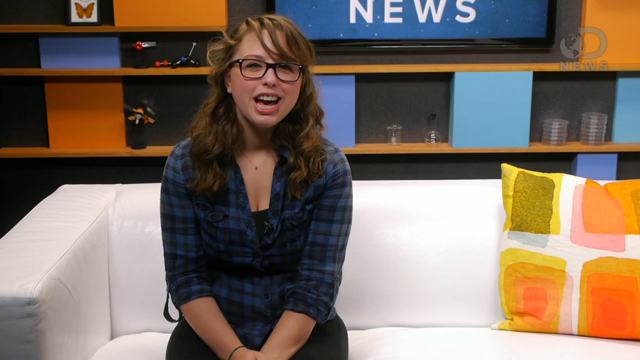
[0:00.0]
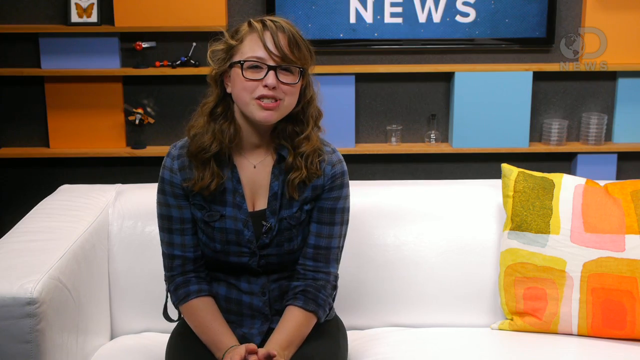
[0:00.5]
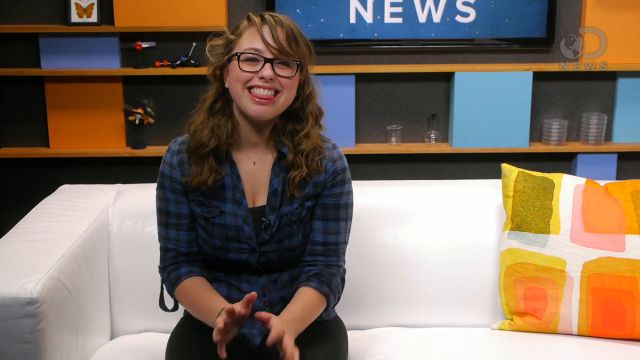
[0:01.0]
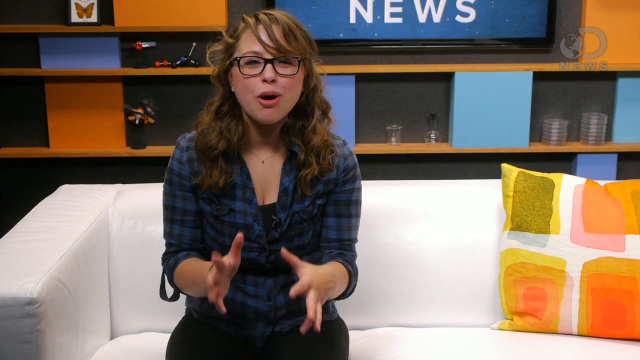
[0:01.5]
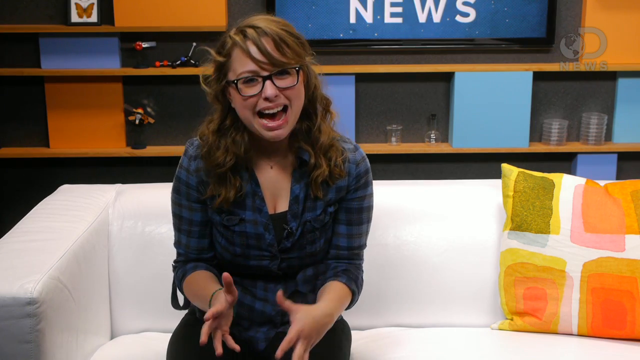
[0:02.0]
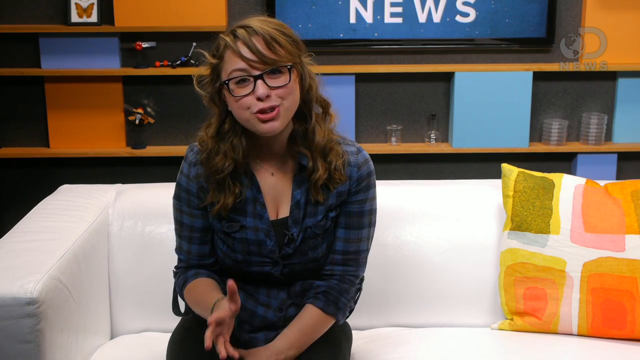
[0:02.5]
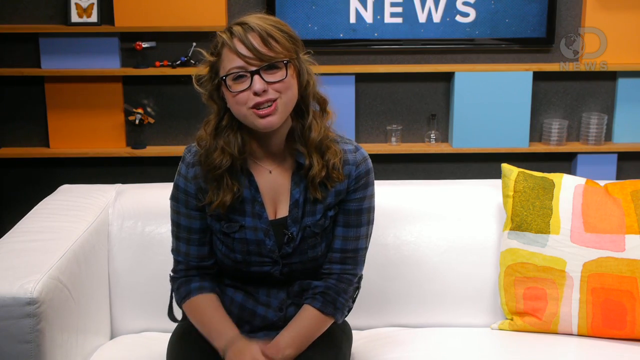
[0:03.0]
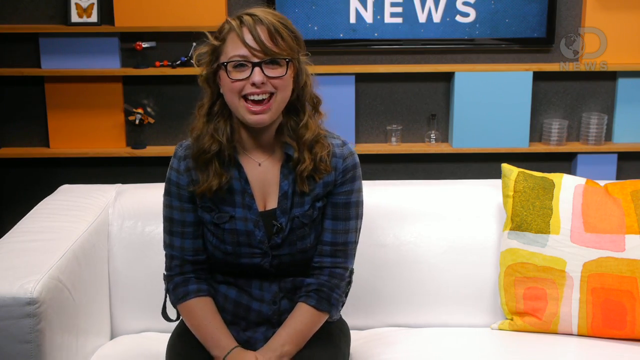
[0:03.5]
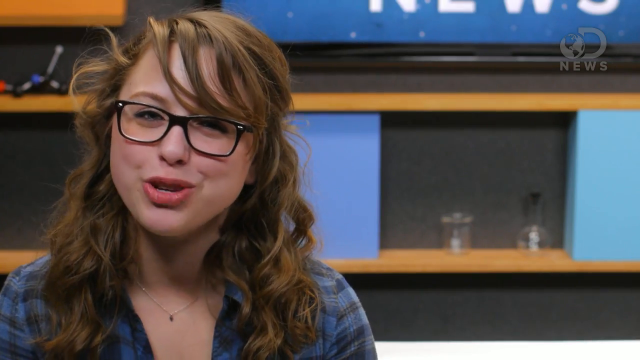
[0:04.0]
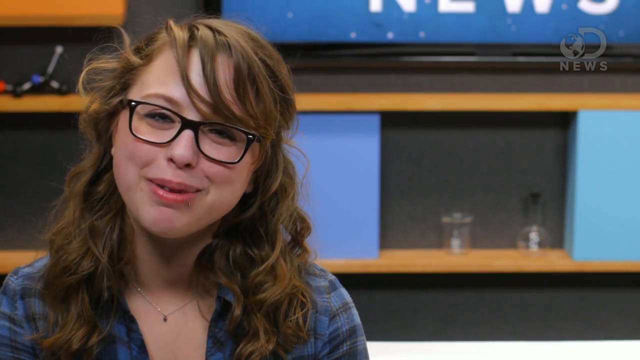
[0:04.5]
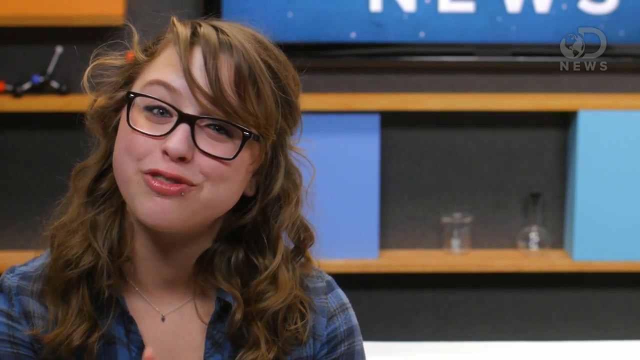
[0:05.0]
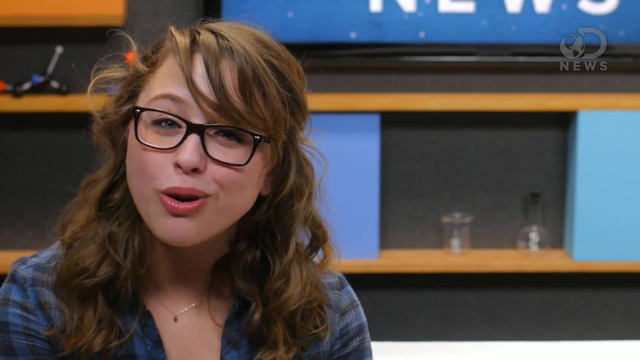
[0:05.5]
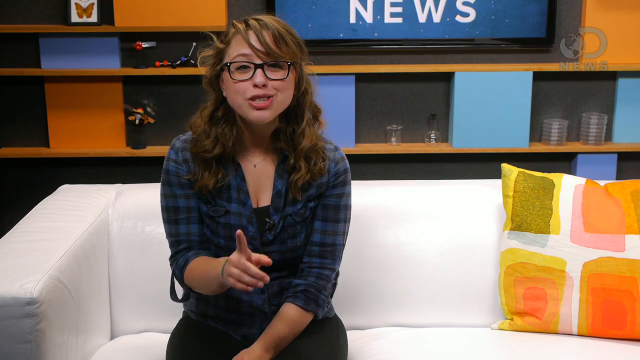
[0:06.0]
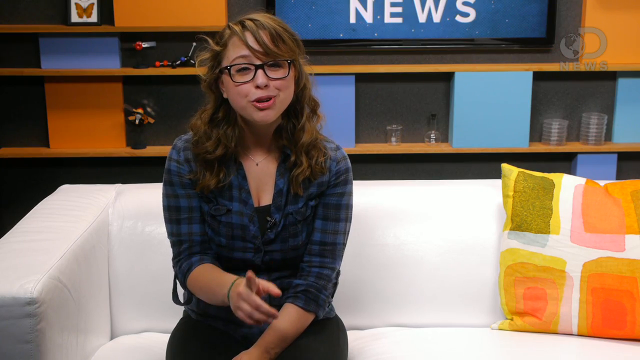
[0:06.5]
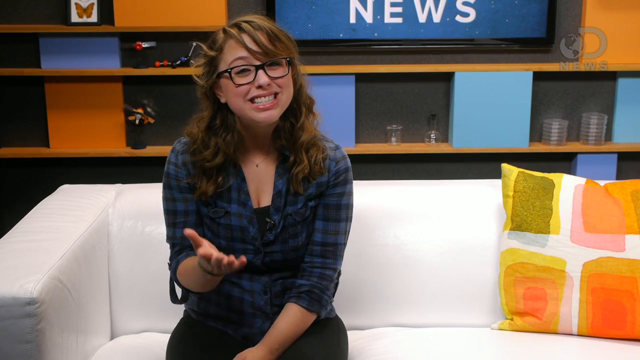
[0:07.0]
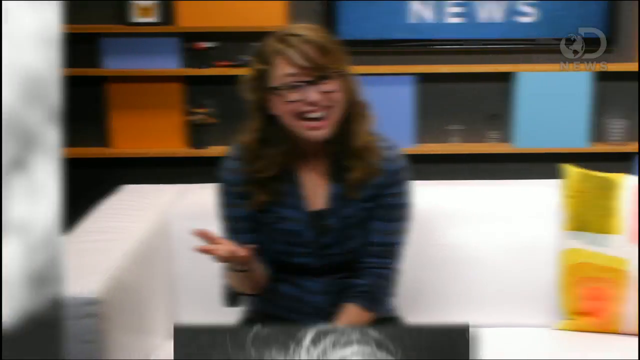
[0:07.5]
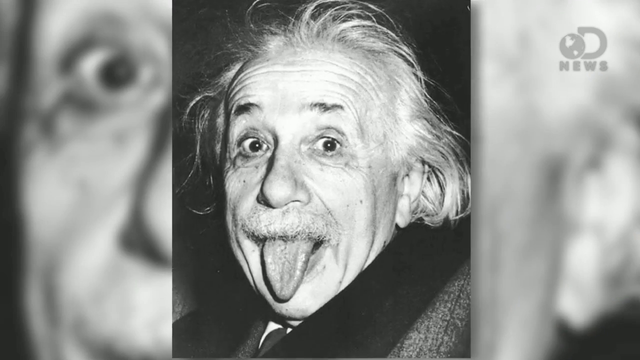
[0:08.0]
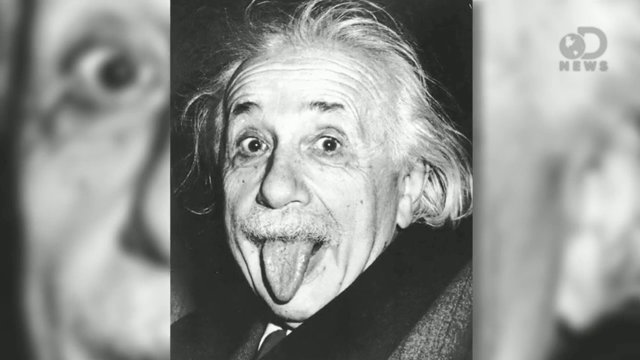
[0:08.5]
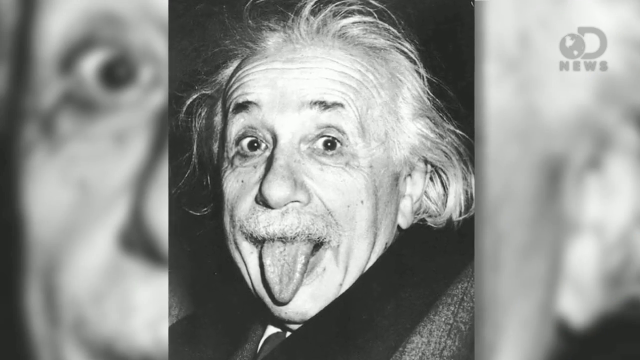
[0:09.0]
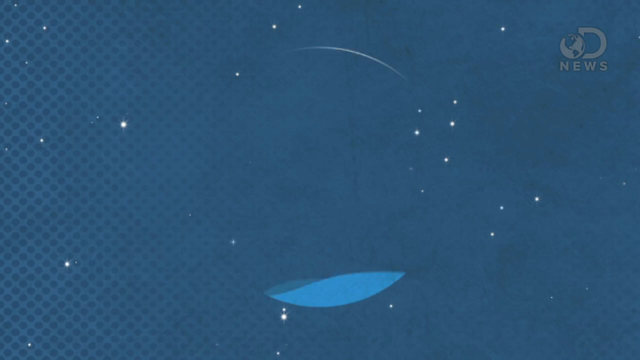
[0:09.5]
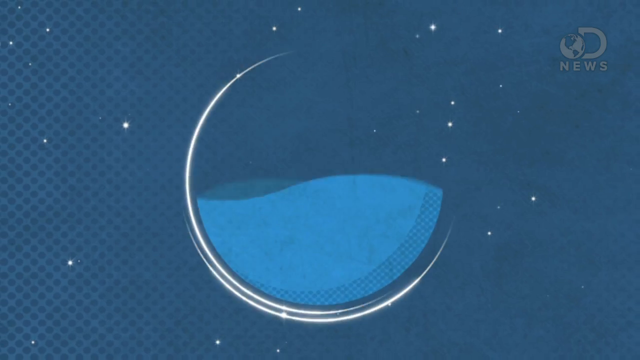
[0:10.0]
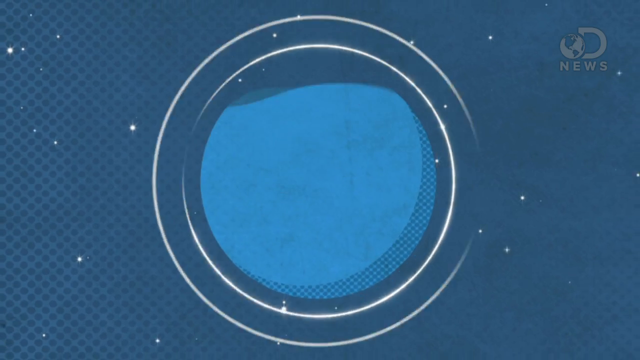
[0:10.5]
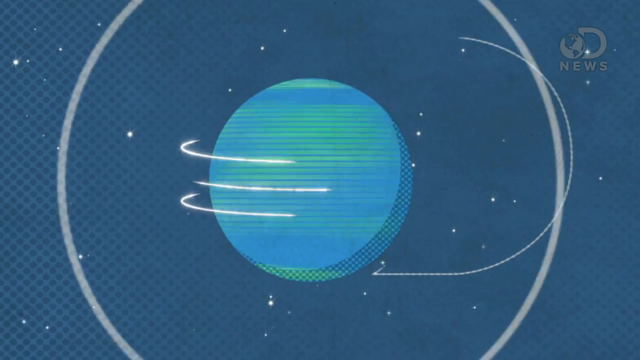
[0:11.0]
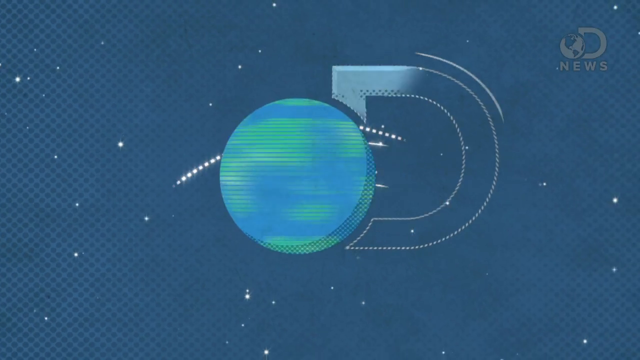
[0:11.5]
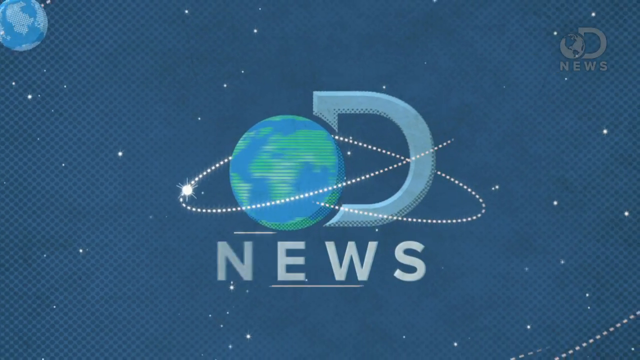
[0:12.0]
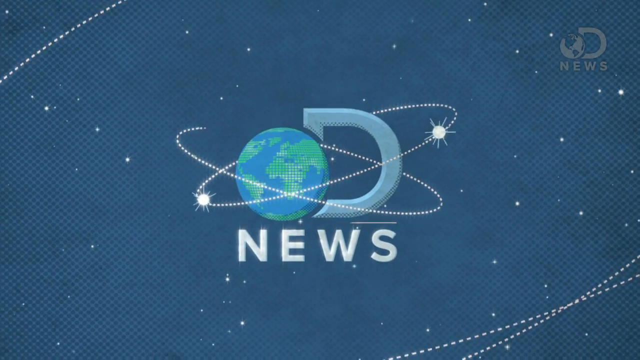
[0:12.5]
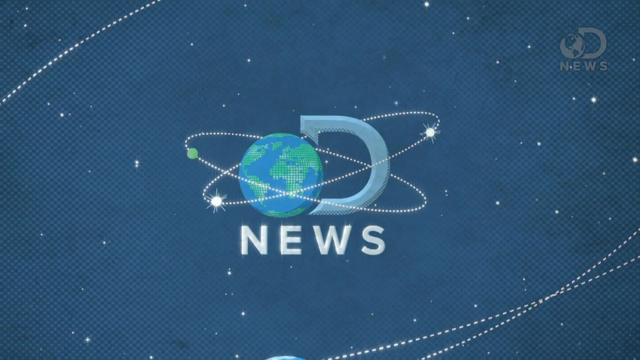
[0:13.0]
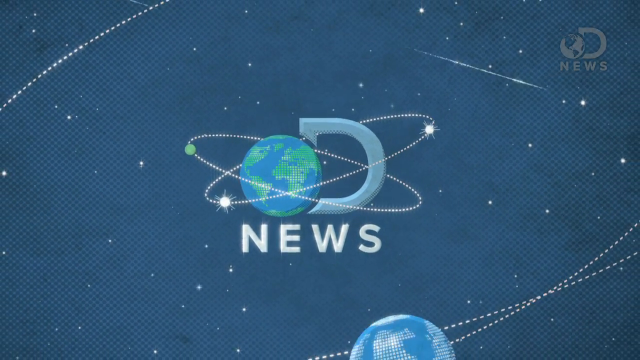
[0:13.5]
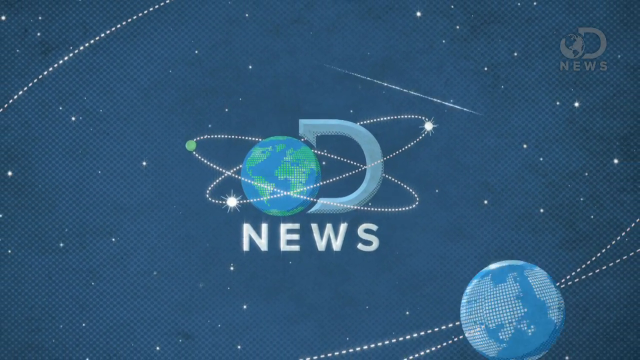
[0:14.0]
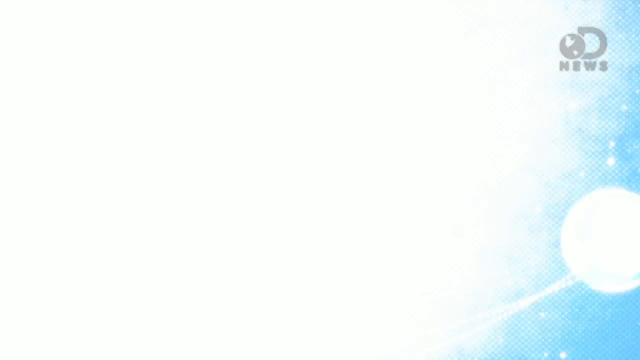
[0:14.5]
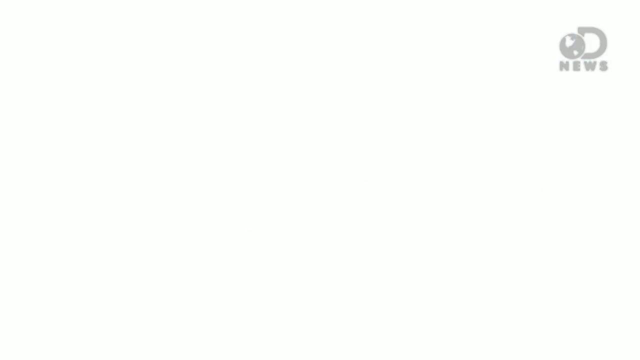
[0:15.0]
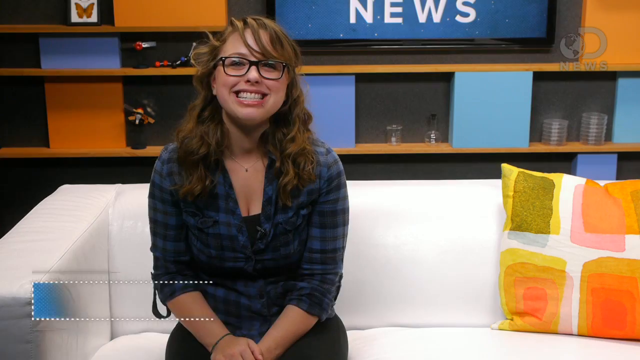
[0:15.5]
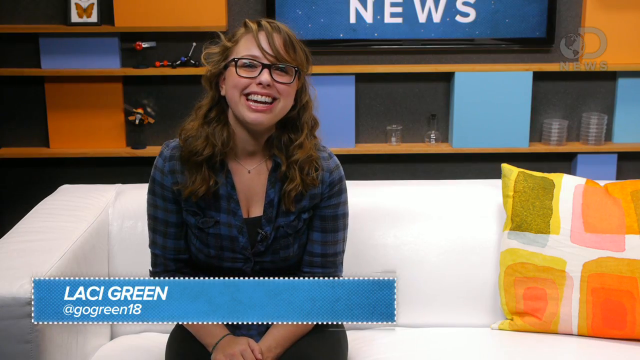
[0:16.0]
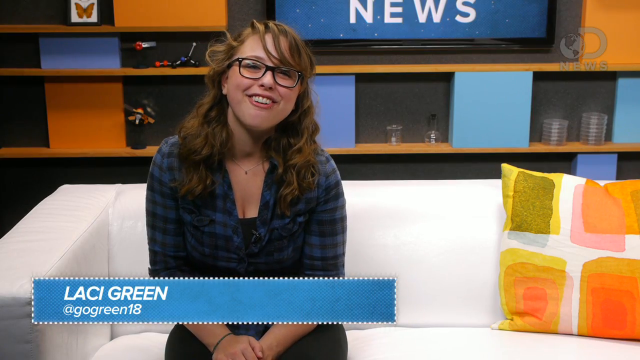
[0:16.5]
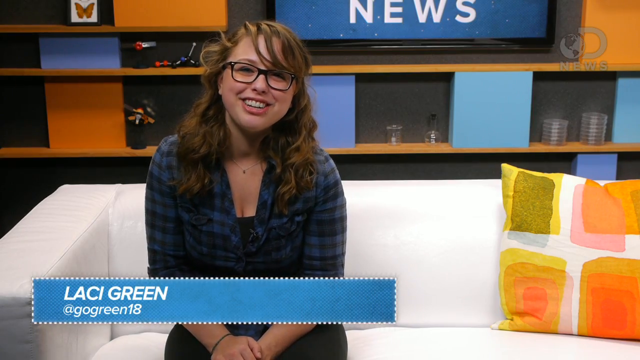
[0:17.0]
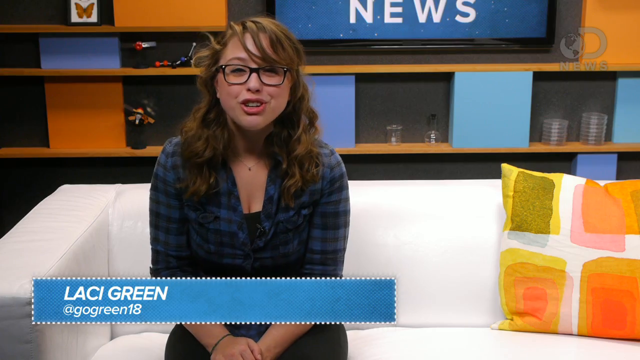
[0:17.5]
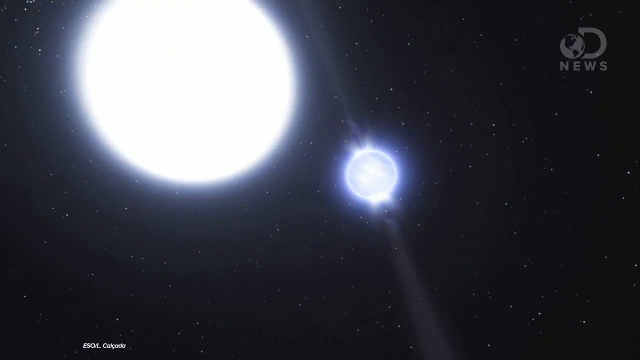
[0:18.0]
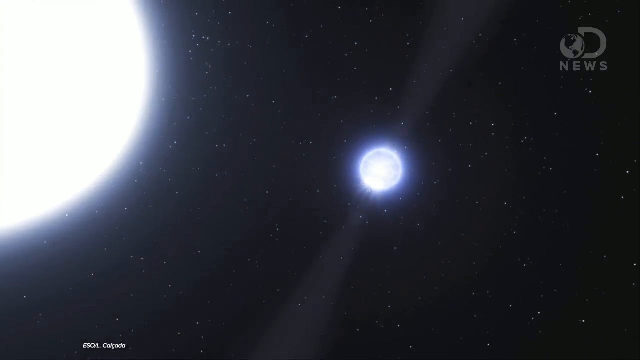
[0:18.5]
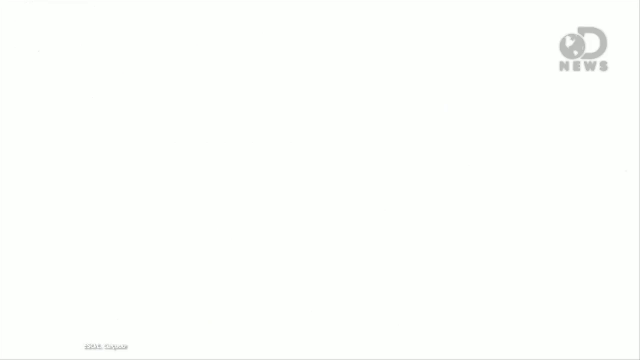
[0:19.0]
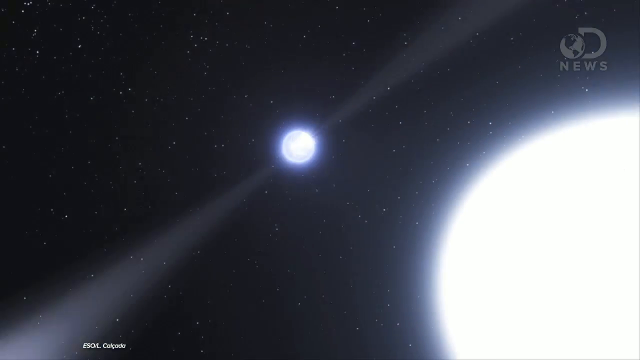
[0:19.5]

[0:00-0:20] A woman sits on her couch, wearing dark-rimmed glasses, smiling and talking happily while gesturing with her hand and pointing. A name under her reads "Lacy Green". A picture of Einstein with his tongue sticking out pops up. In the background there is a spinning globe with the text "D News", and "news" appears in several places. A pillow on the couch is kind of different colors: white with some green, orange and yellow. The background has walls in blue and orange and shelves with a few items on them.